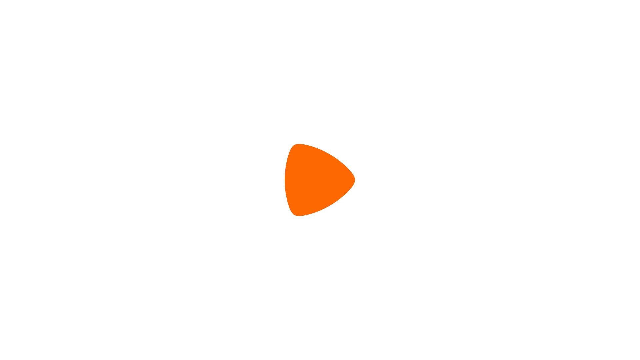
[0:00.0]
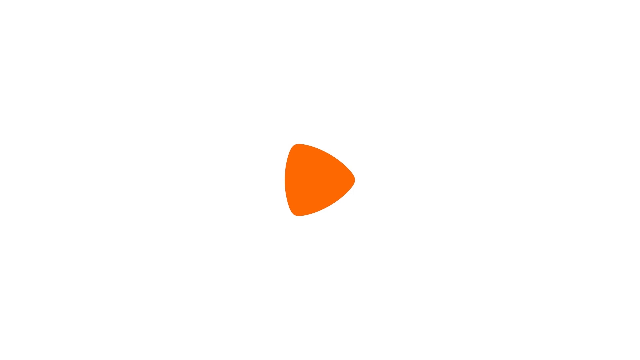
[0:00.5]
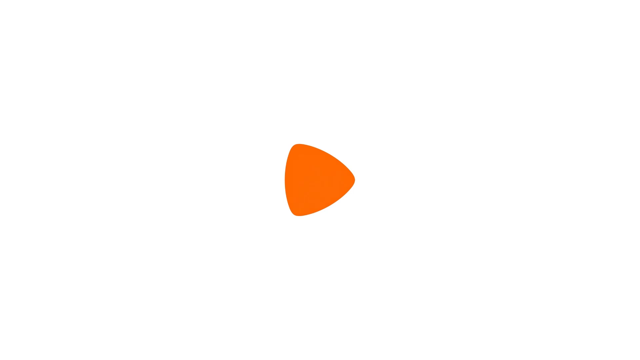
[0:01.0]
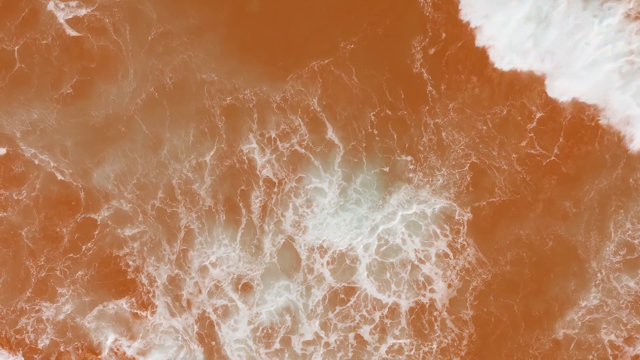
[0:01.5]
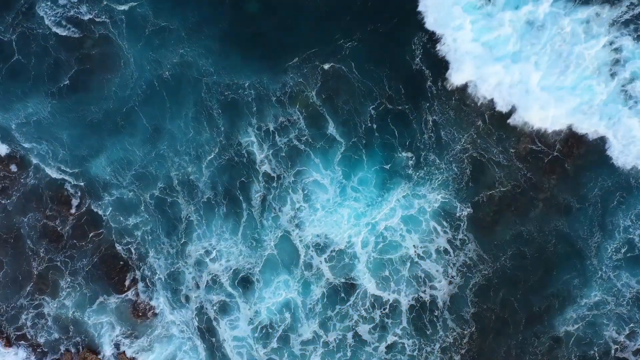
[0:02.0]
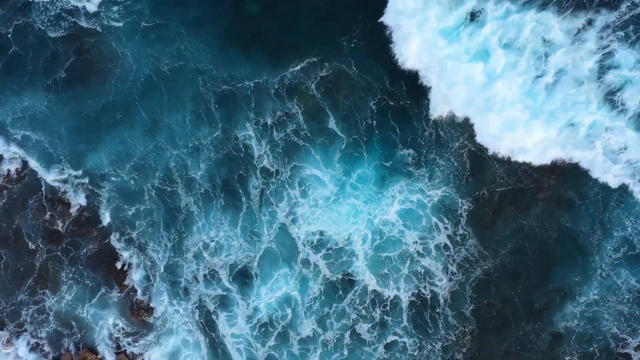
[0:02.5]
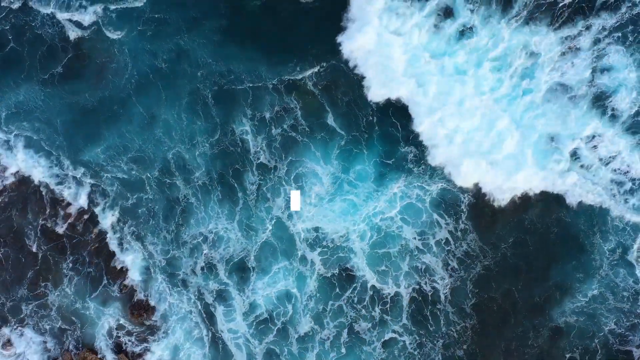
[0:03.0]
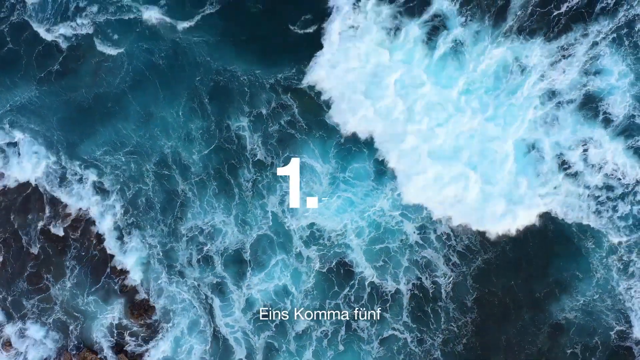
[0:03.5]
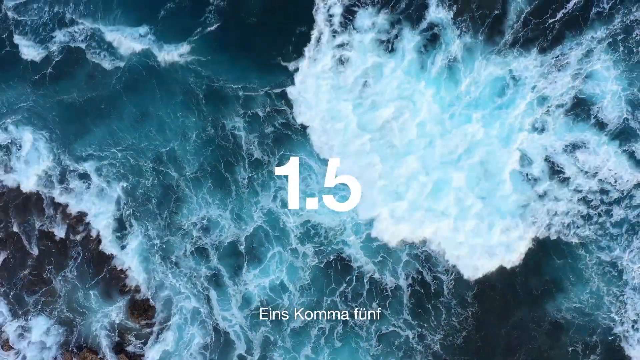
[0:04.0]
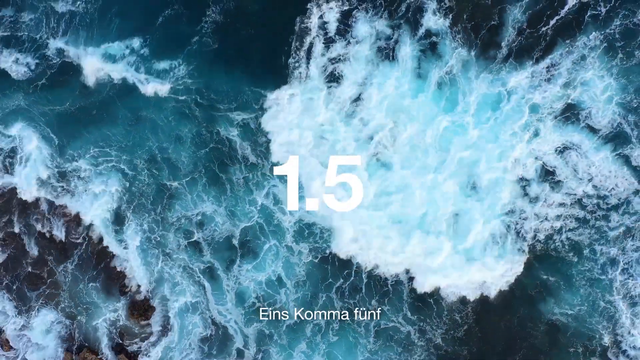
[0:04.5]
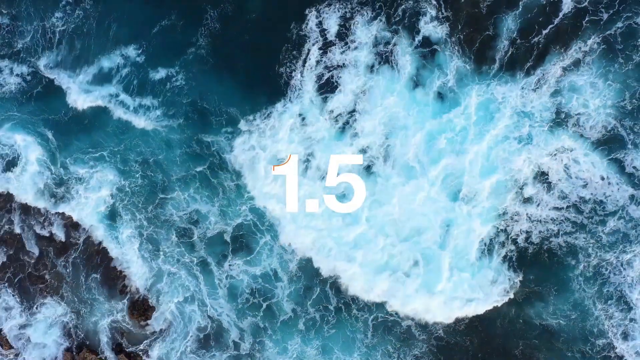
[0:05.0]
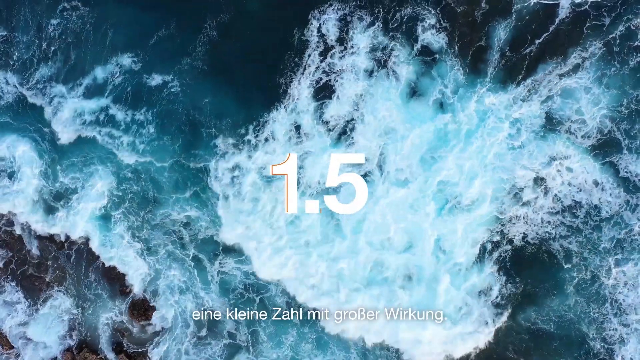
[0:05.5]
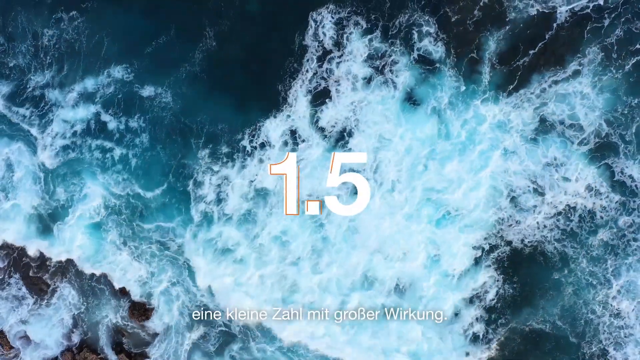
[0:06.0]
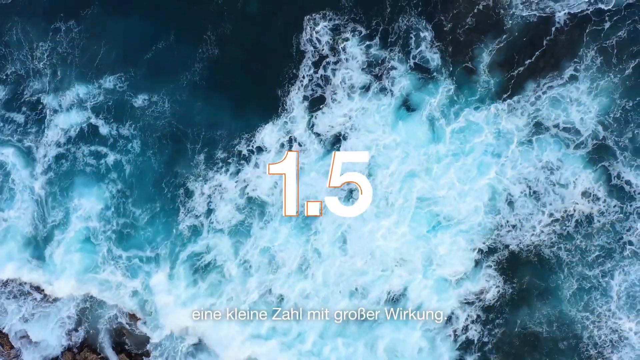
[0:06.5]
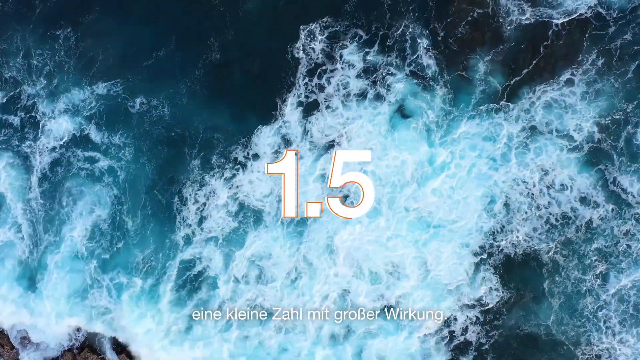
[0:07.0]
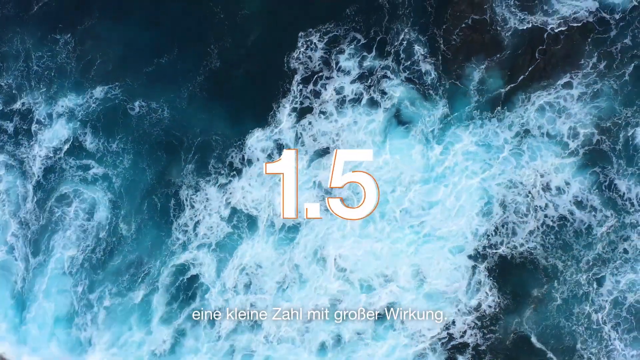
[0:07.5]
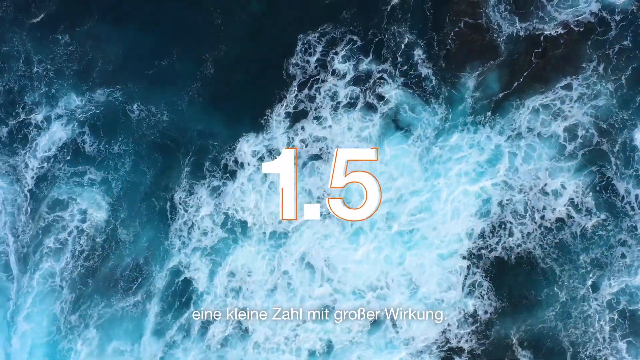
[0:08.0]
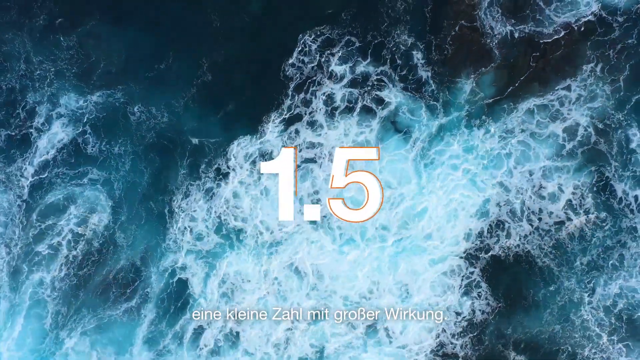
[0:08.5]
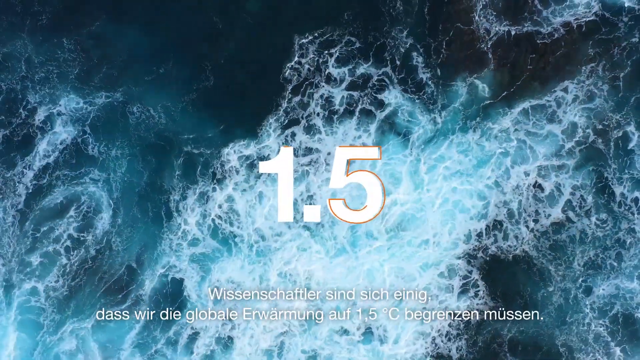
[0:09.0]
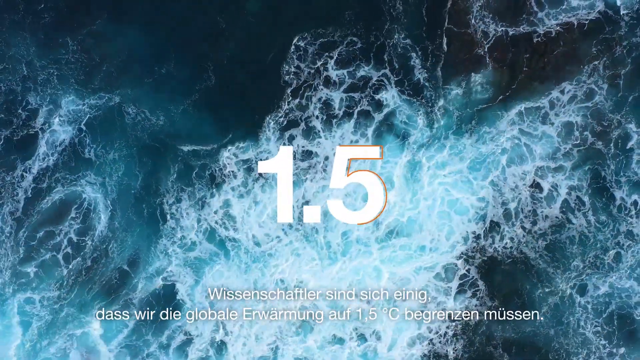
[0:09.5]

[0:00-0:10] The video opens on a white background with an orange play button, then transitions to a scene of ocean water waves, with kind of whitish, kind of heavy water. The number 1.5 then appears on screen along with some text that is not in English. No humans or animals appear.